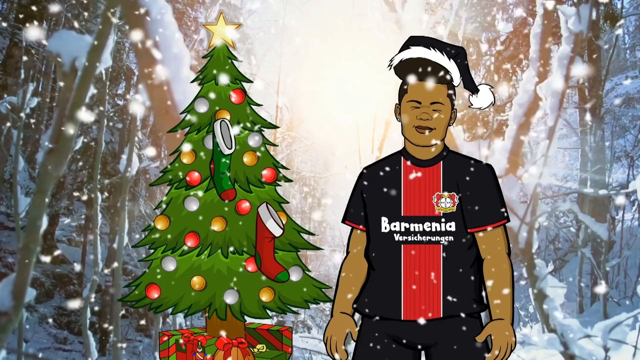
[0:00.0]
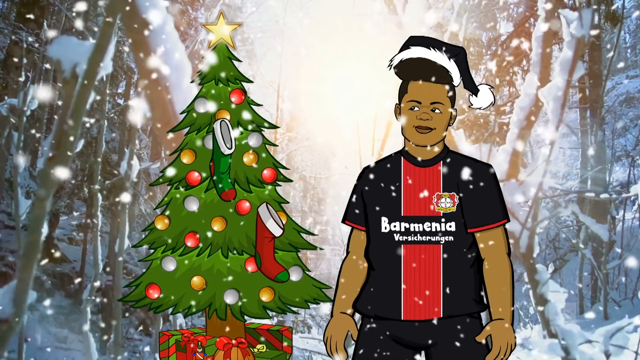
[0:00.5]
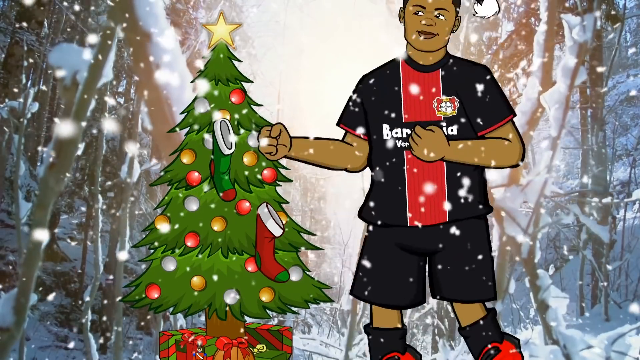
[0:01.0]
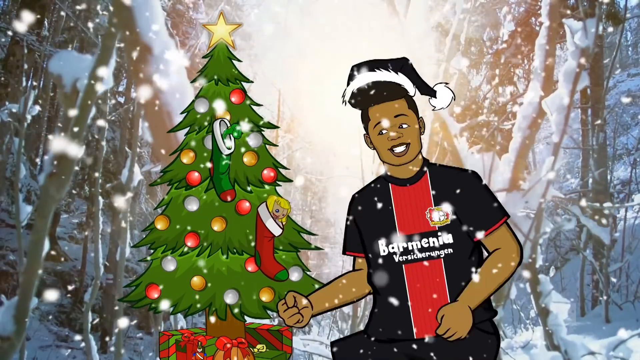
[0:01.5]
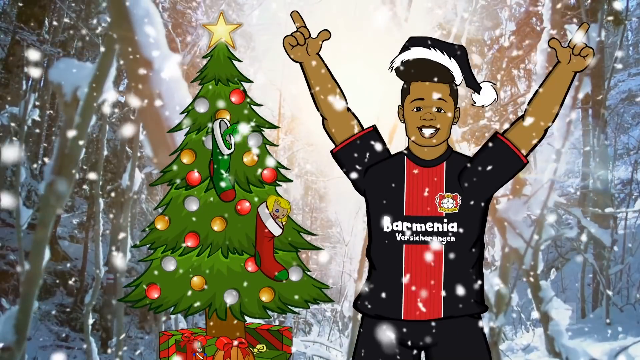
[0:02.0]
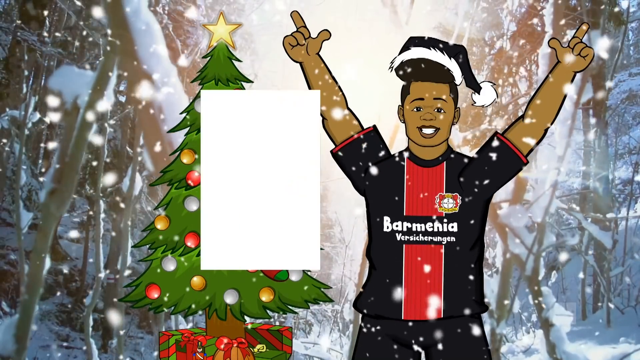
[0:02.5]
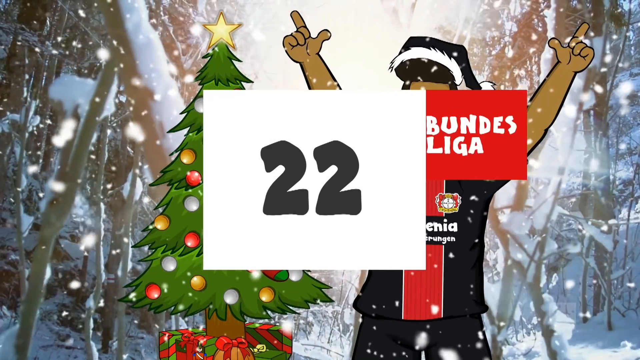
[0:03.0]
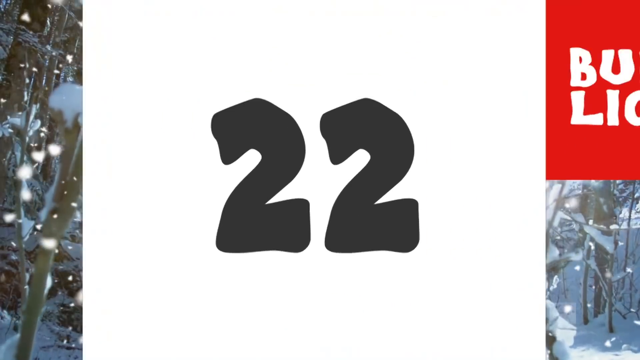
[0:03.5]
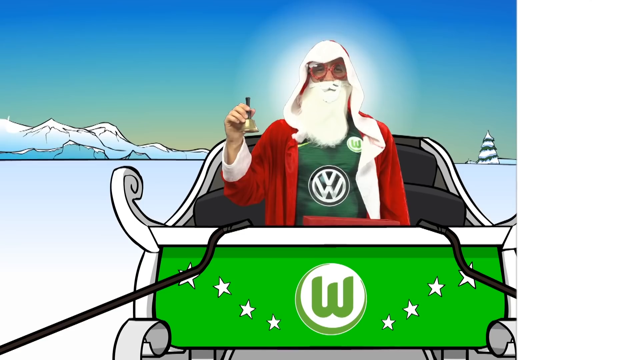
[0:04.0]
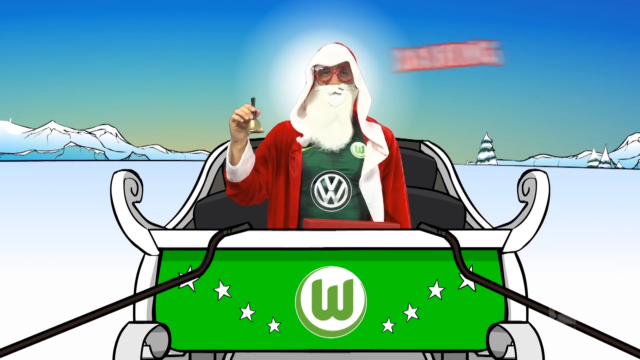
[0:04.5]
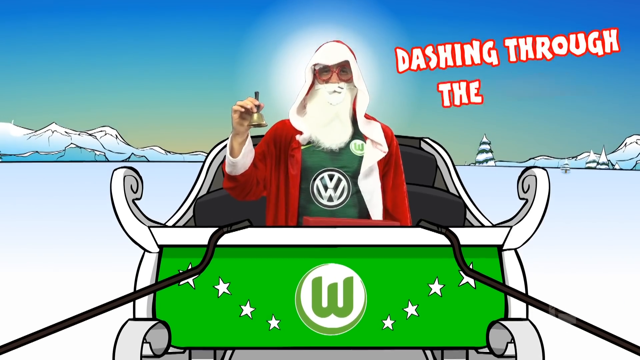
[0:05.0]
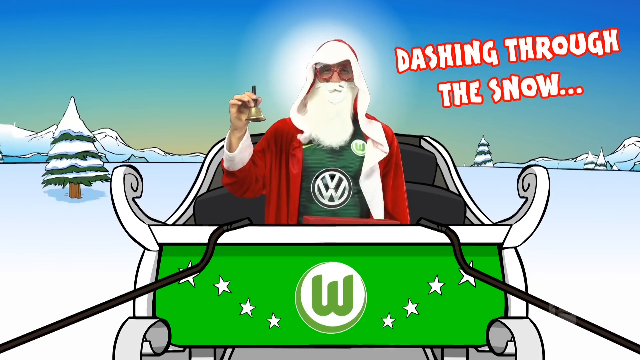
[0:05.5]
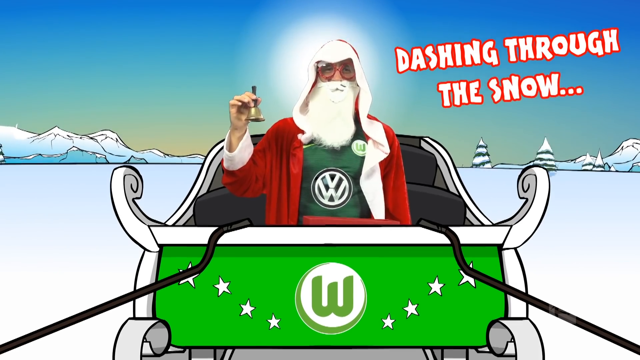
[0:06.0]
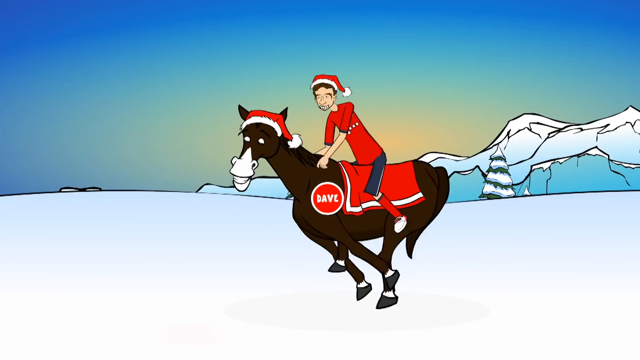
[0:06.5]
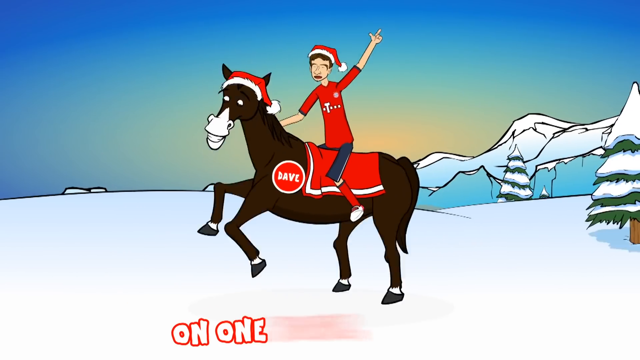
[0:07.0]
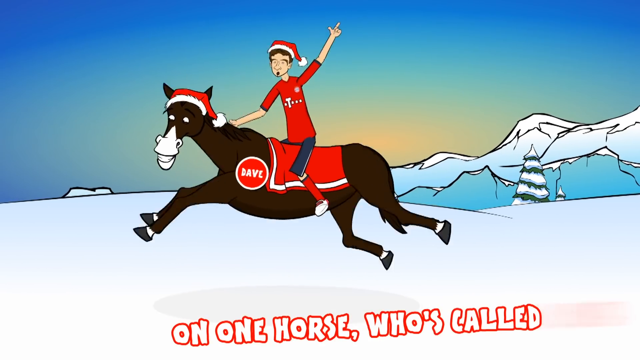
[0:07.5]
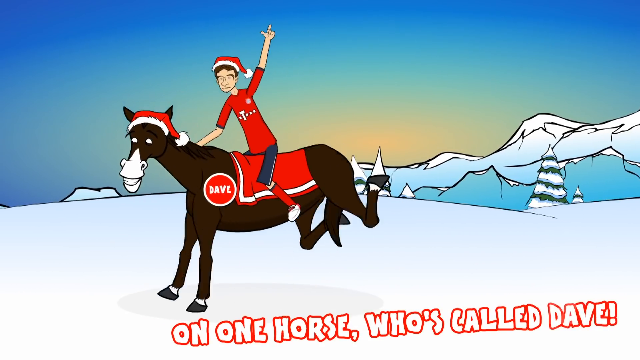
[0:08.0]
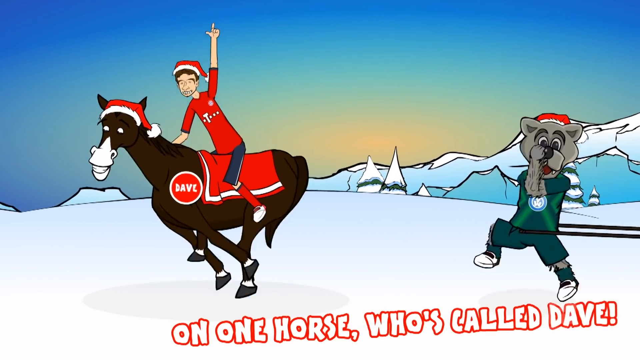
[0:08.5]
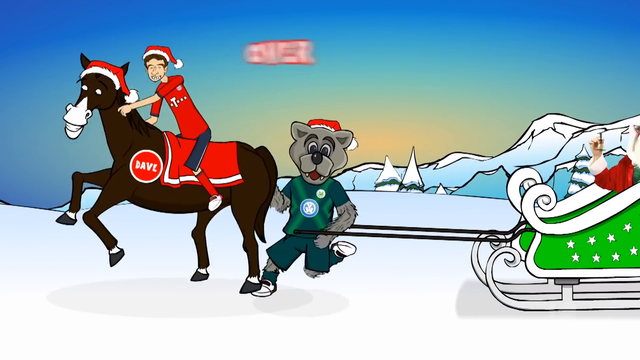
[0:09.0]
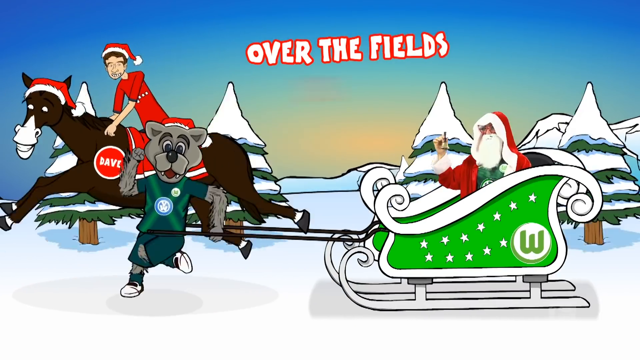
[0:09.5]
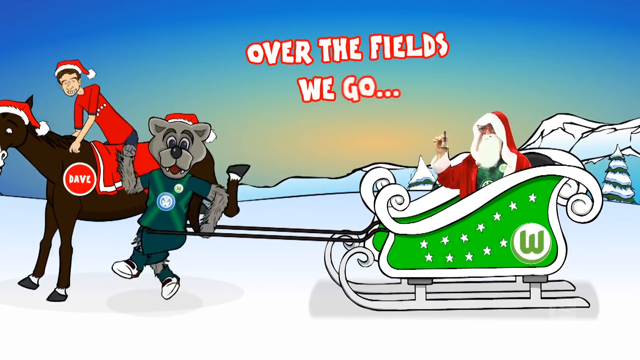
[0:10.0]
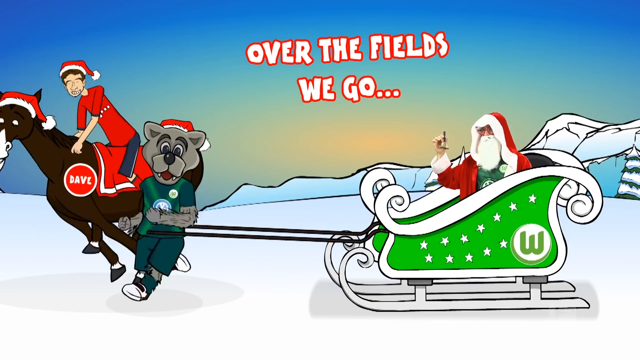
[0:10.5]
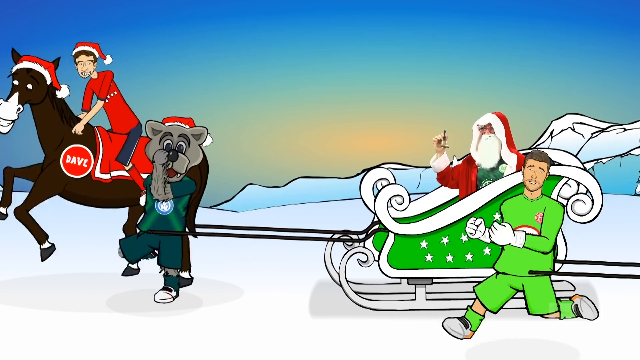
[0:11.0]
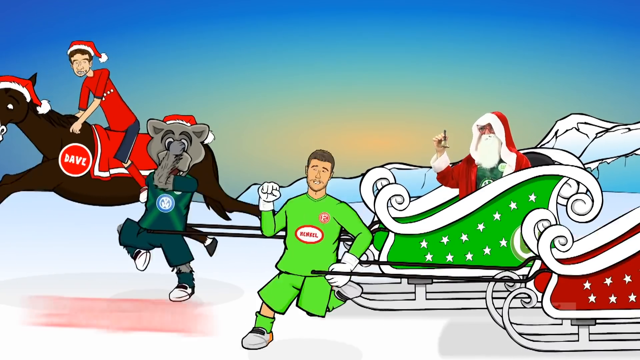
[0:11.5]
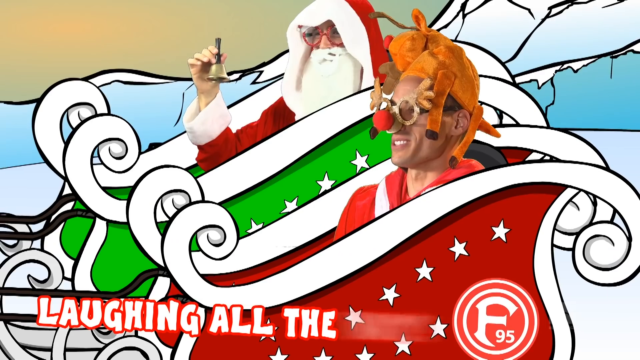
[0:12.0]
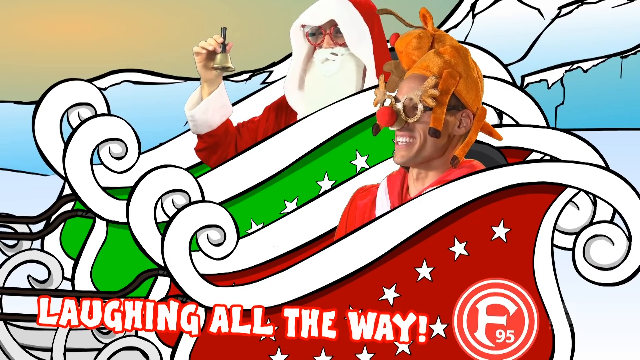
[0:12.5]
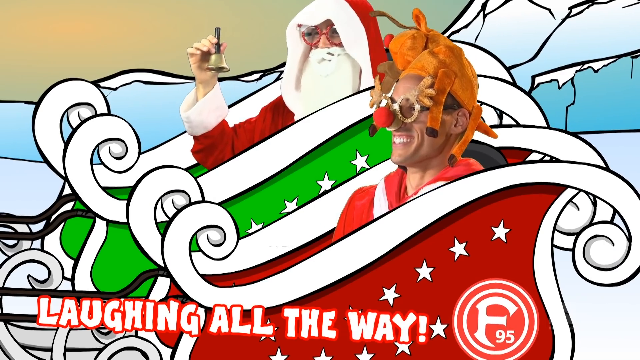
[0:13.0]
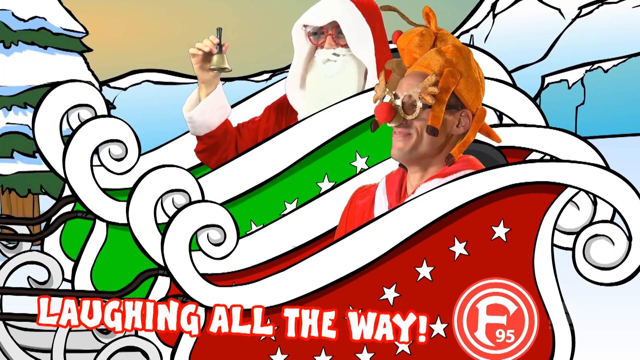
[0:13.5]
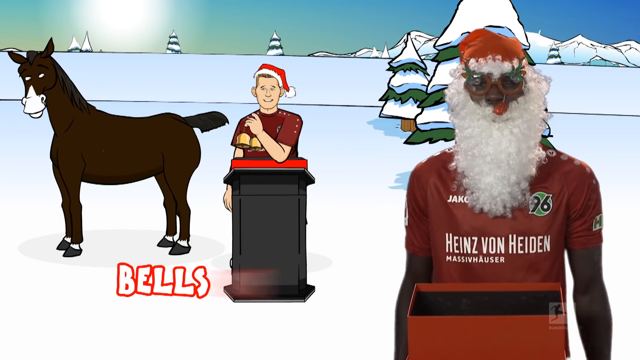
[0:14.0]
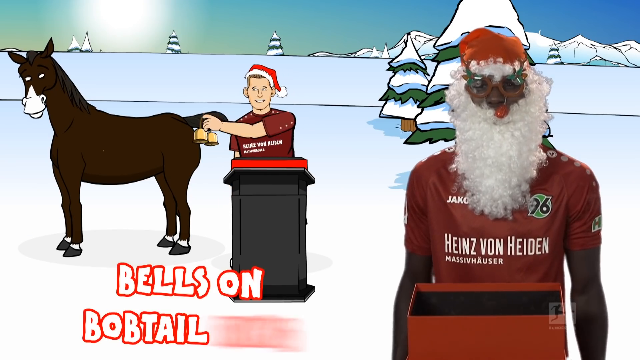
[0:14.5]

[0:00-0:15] The video is animated so far. A man wears a short-sleeved black and red shirt with "Garmincia" written on it and text in another language beneath. He is in a forest; the forest looks real, but the man and the Christmas tree beside him are animated. He wears a black Santa hat and holds his hands in the air with his fingers pointed up and his thumbs up. To his right, on the viewer's left, is an animated Christmas tree with presents under it, a few stockings hanging in the tree, different colored Christmas bulbs and a star on top. The number 22 appears. The camera pans to Santa in a green sleigh, holding up a bell. He has something like a Volkswagen logo on his shirt and wears a red Santa cape, a red Santa hat and a white beard. He is real, but the scene around him is animated. The text "Dashing through" appears, and at this point it does not show what is pulling the sled. Then "Dashing through the snow" appears. An animated person rides a running mule or horse. An animal, possibly a raccoon, pulls the sled with Santa in it. Another sleigh is pulled by an animated person in red and green, while the person in that sled is real. Text reads "on a one horse". The real person in the sled has a clown nose and a strange hat that looks like an animal, and he smiles and mouths something.